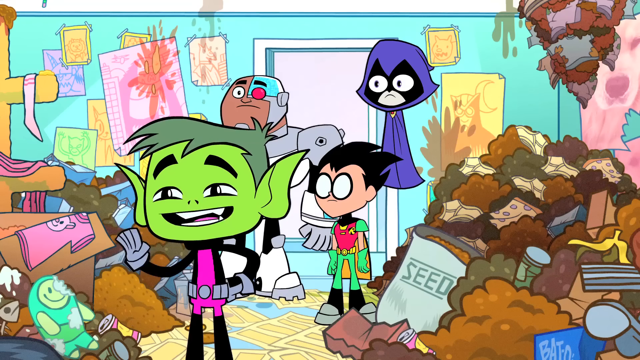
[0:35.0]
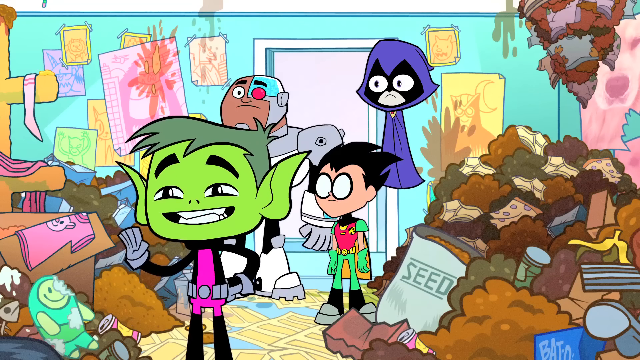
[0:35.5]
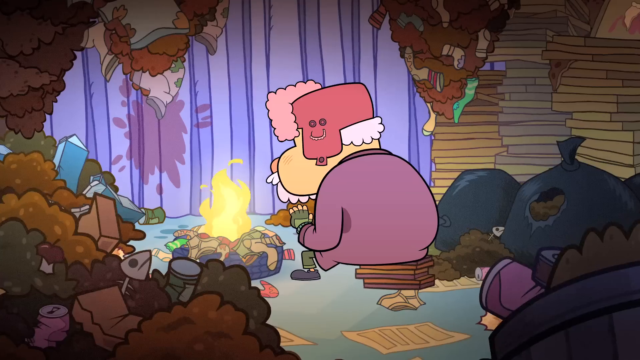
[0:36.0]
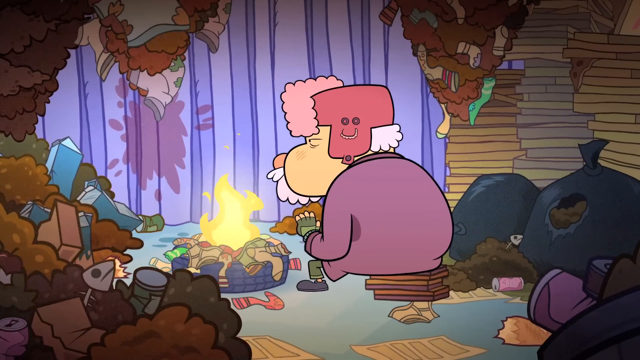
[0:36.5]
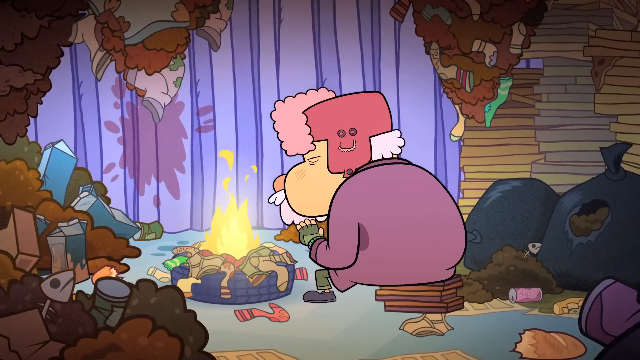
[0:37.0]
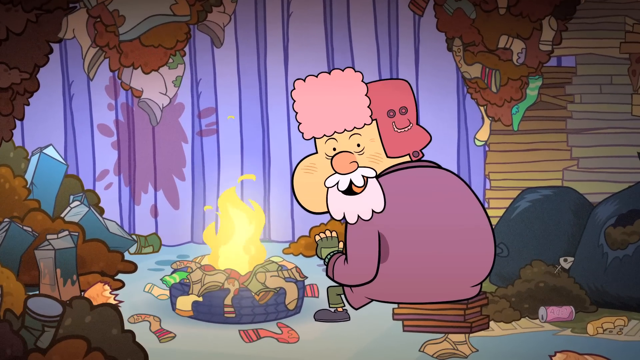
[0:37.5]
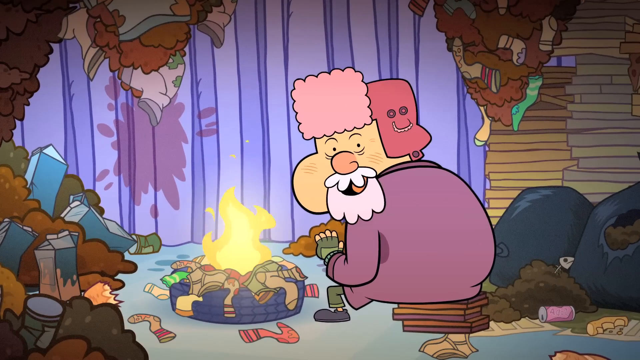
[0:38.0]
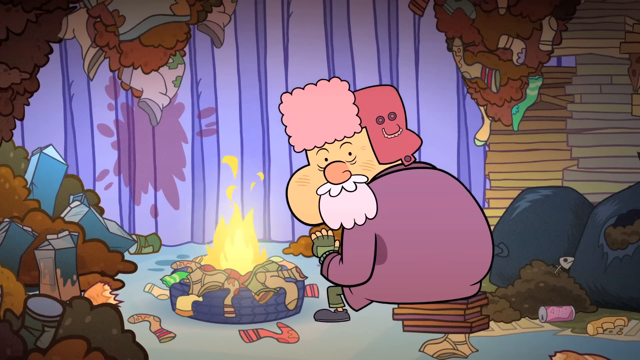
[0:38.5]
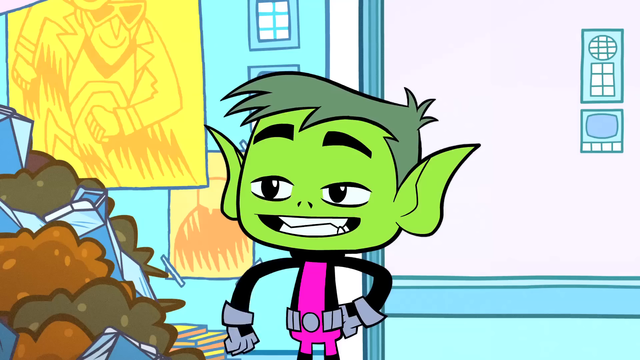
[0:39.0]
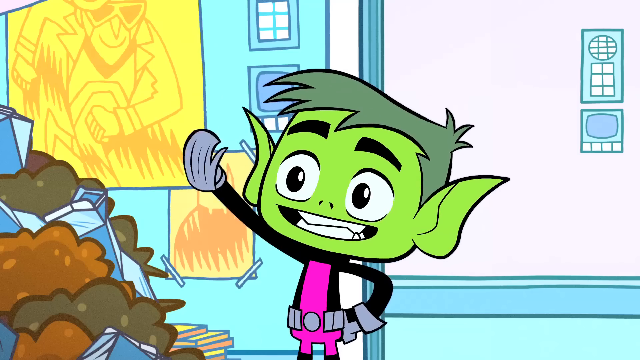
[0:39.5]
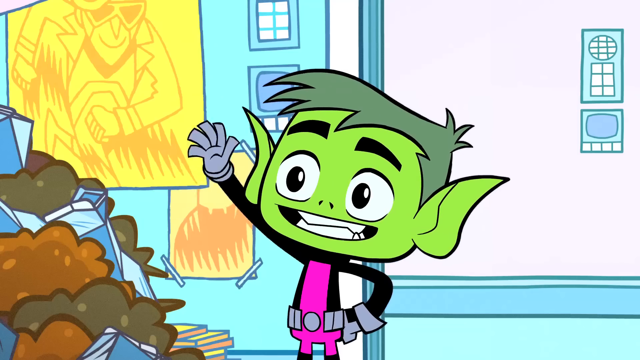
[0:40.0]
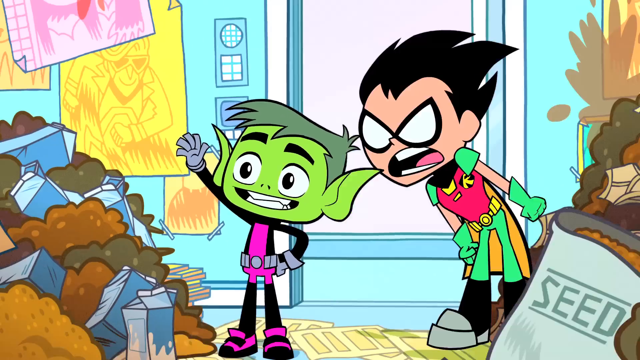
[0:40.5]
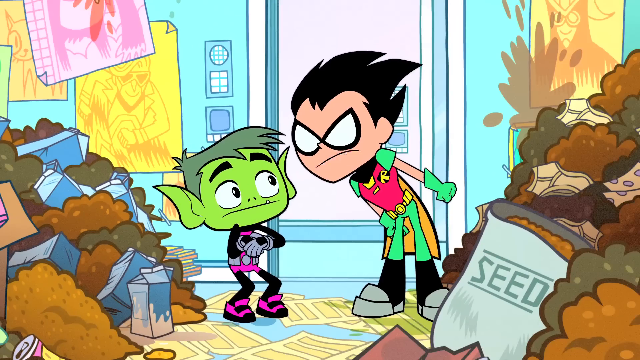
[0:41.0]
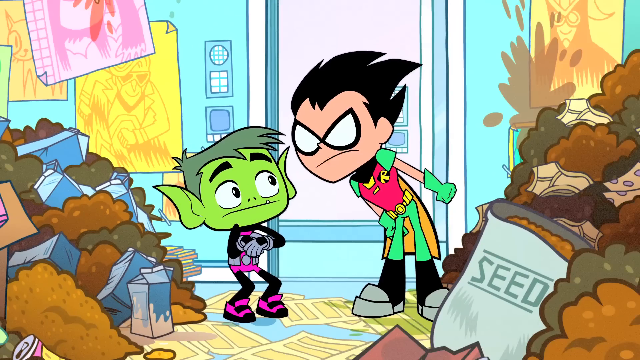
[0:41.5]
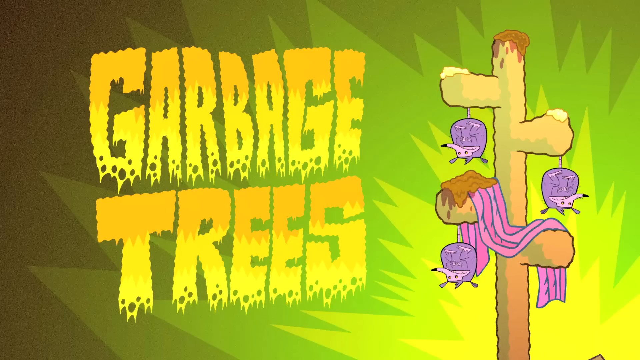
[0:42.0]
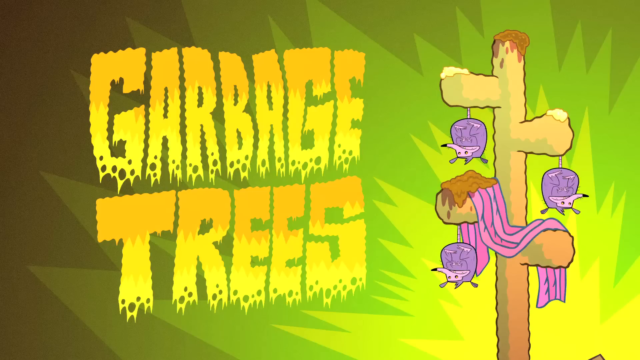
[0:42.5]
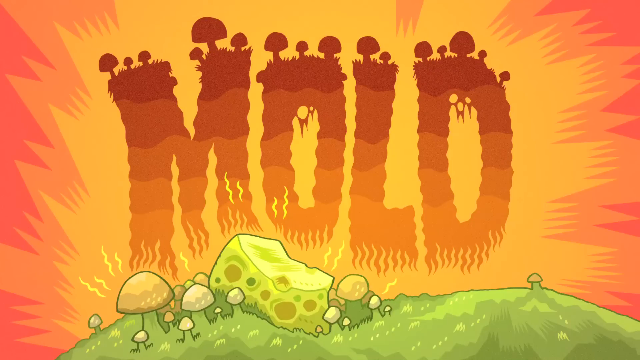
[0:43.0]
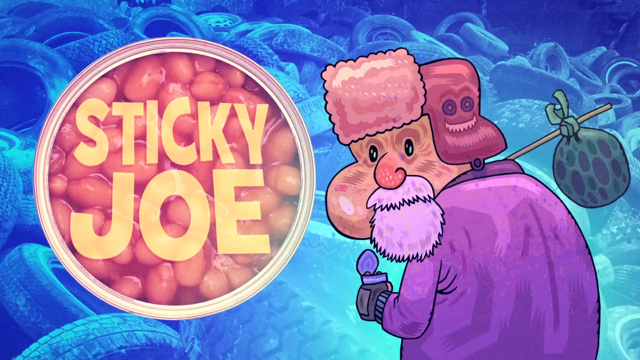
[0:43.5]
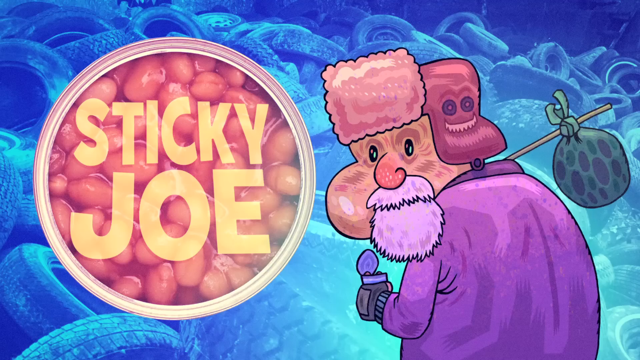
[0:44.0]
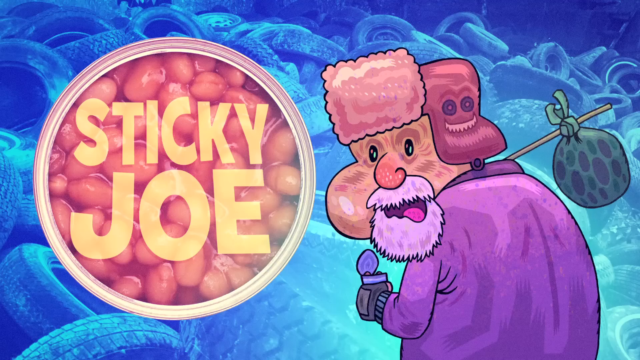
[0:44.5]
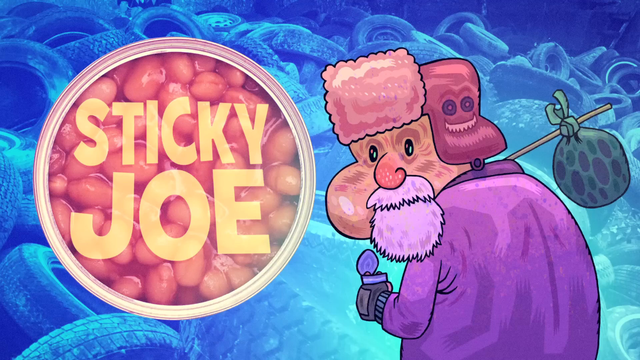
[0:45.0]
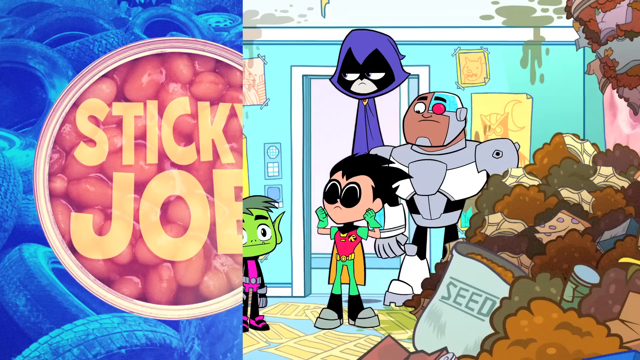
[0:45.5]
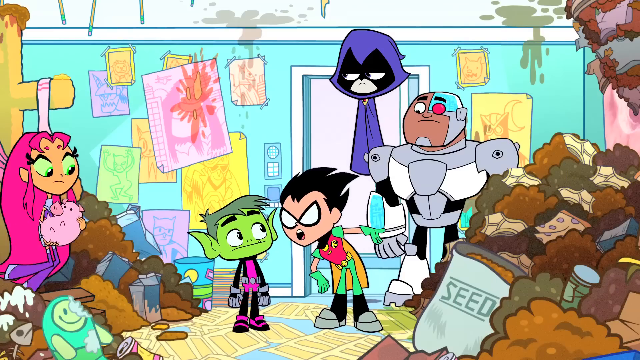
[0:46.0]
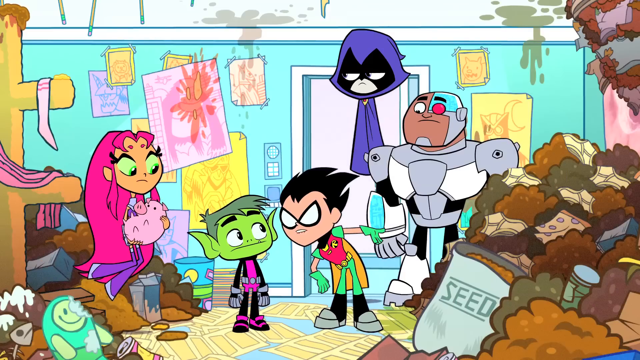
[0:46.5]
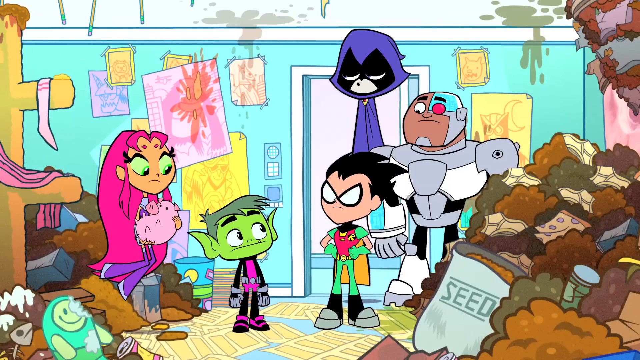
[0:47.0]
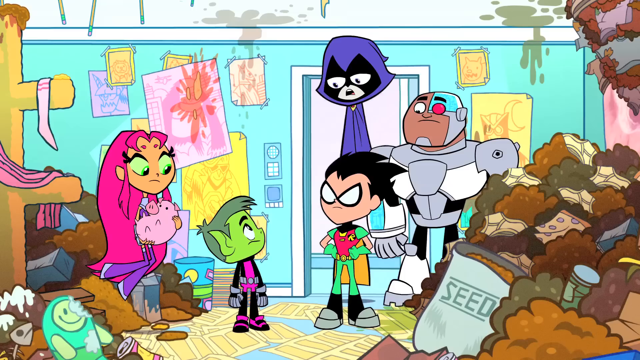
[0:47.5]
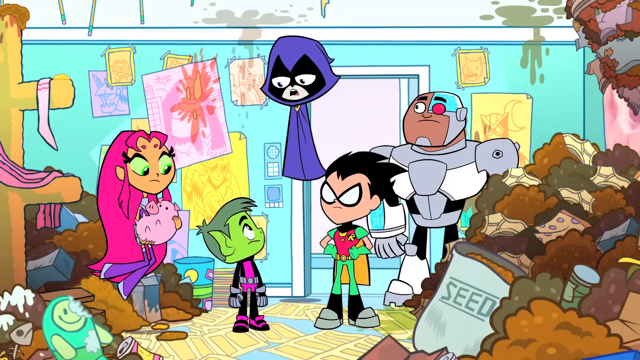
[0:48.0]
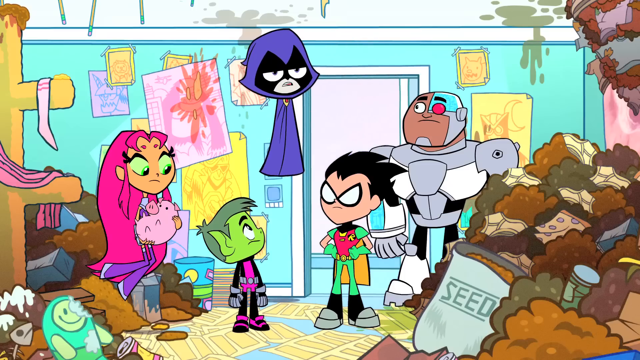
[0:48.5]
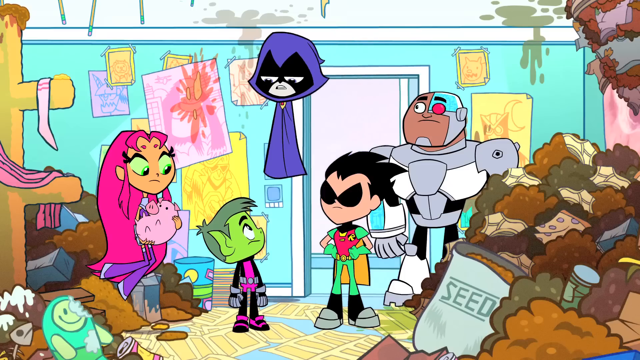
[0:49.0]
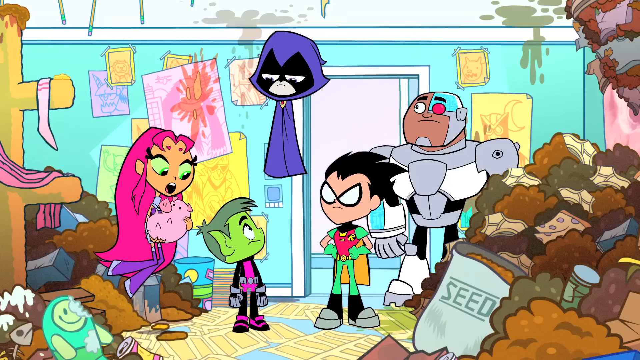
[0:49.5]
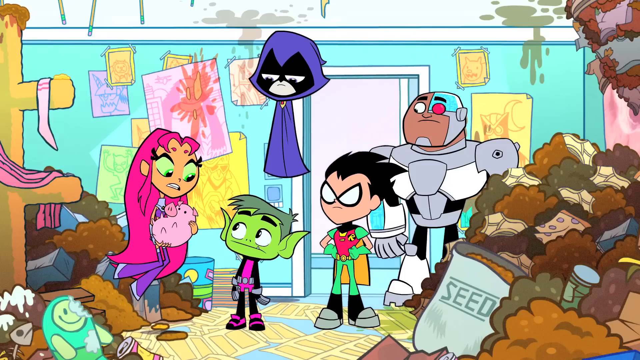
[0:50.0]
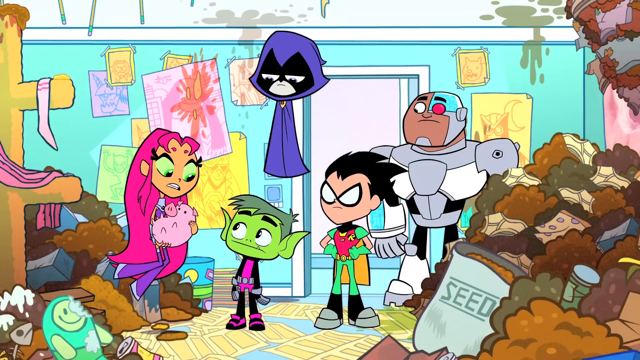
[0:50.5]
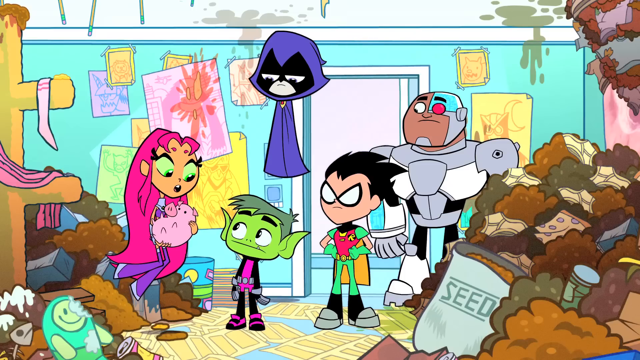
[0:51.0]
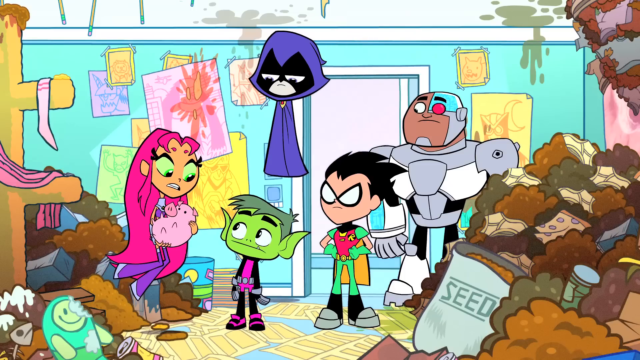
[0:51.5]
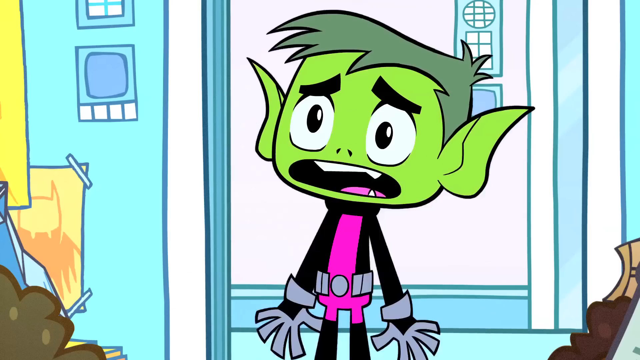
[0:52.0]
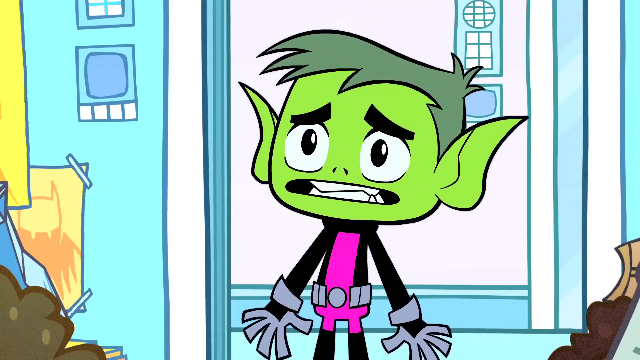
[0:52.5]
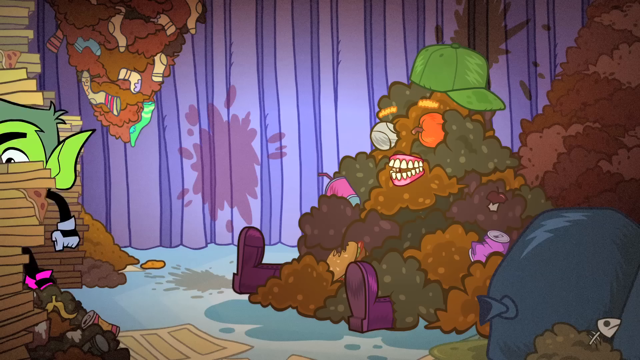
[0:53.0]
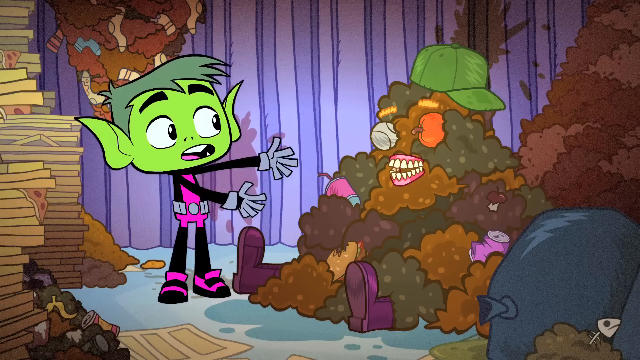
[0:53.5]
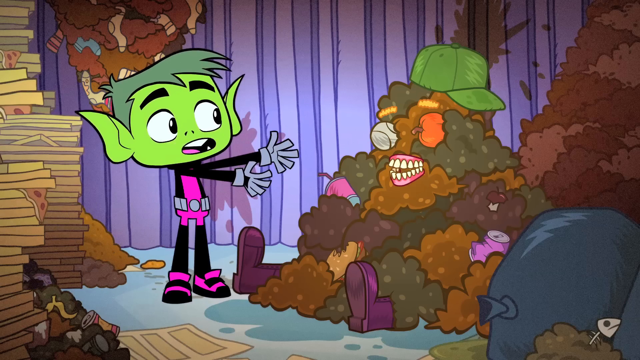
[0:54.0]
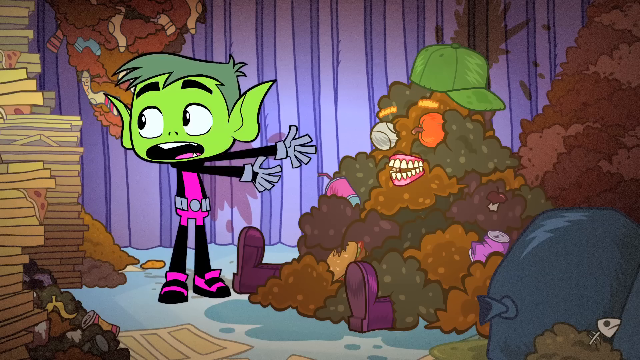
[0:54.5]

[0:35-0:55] In a scene from the Teen Titans Go animated show, Beast Boy, Cyborg, Raven and Robin are surrounded by piles of garbage in a really filthy room. Beast Boy, at the front of the image, seems to wave as if saying hello. The scene transitions to what looks like a homeless man in a purple jacket, with a tire in front of him and socks and underwear lit on fire to keep him warm. A snippet cuts back to Robin yelling at Beast Boy for waving at him, with little animated panels appearing as he seems to yell about different things. The screen says "garbage trees" and shows what look like possums hanging from a tree. Then it says "mold" and shows a somewhat zoomed-in image of the homeless man with his bindle over his shoulder, holding a can in one hand. Next to him is a can of beans with "Sticky Joe" written on it; the "Sticky Joe" is written on the actual beans in a yellowish coloring, and the beans look very realistic rather than animated.